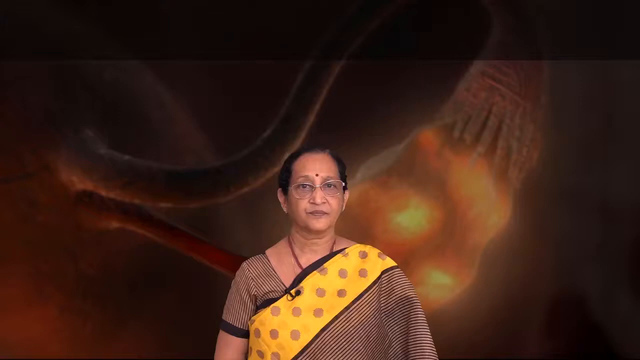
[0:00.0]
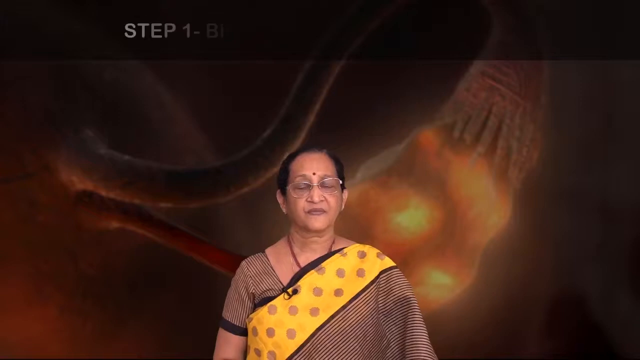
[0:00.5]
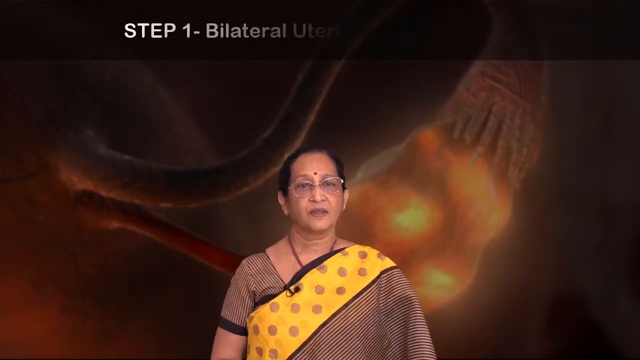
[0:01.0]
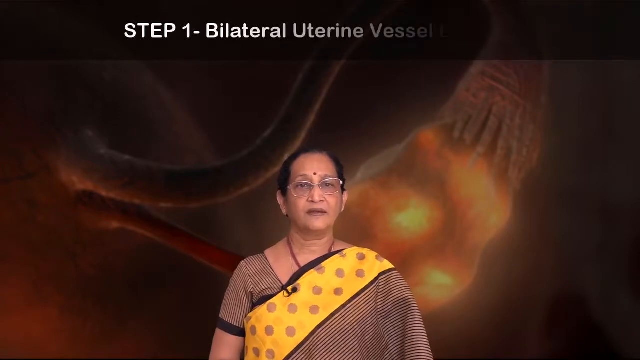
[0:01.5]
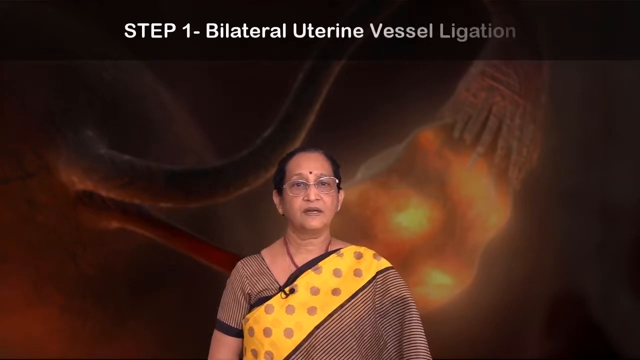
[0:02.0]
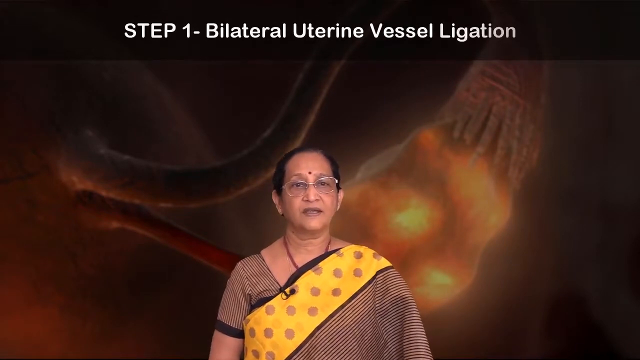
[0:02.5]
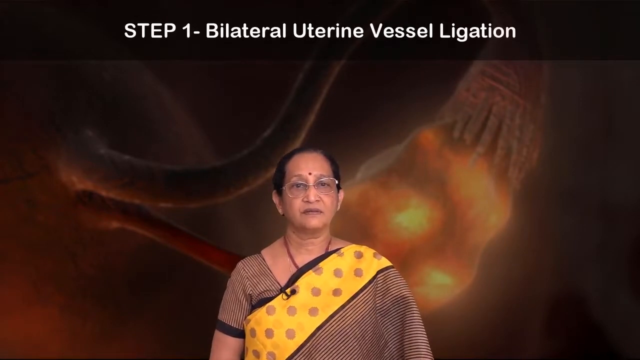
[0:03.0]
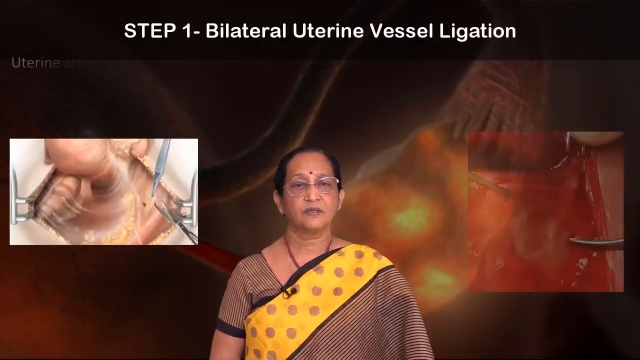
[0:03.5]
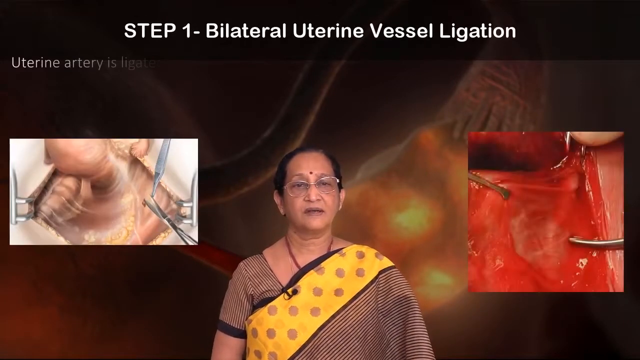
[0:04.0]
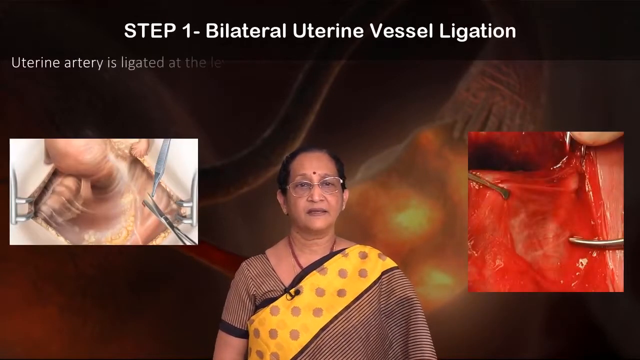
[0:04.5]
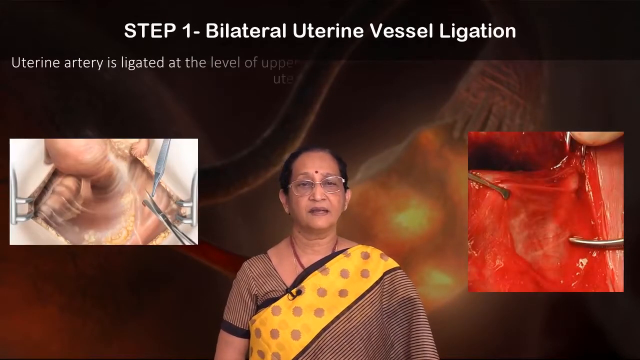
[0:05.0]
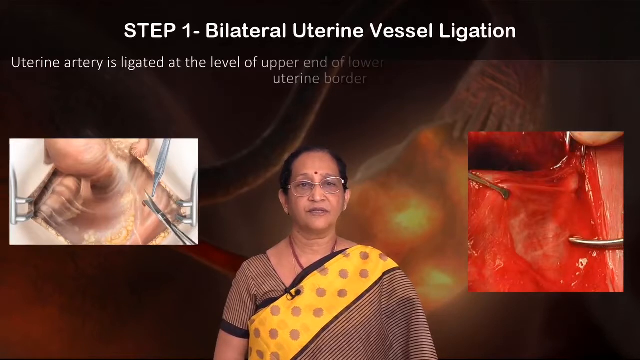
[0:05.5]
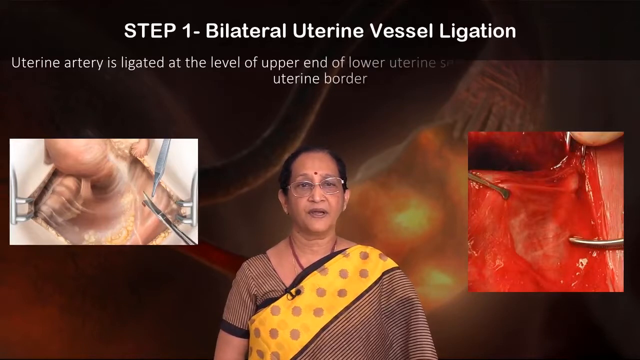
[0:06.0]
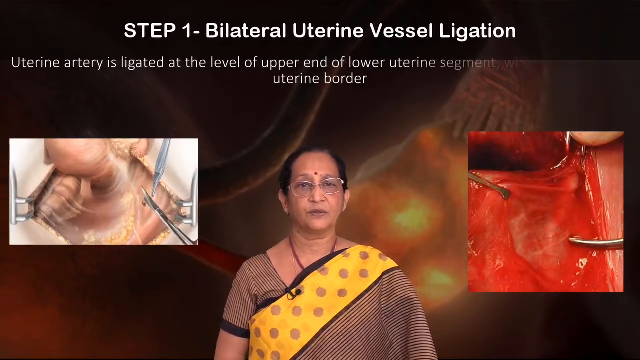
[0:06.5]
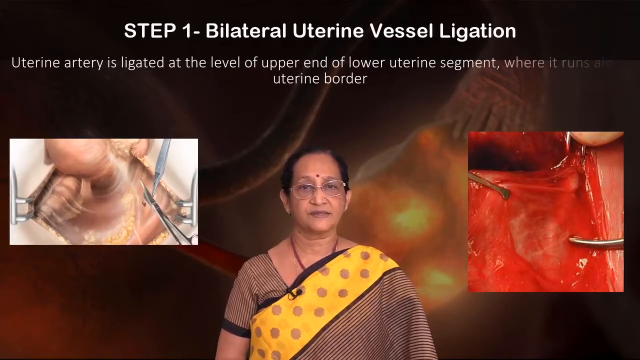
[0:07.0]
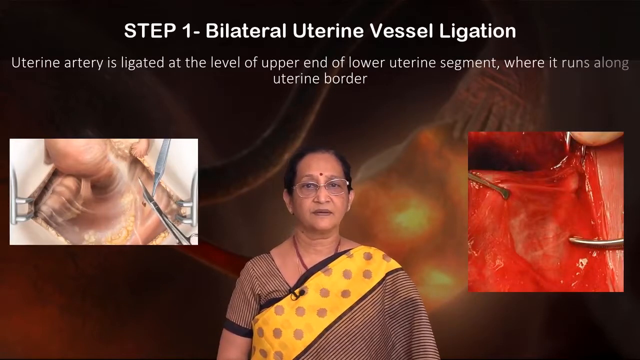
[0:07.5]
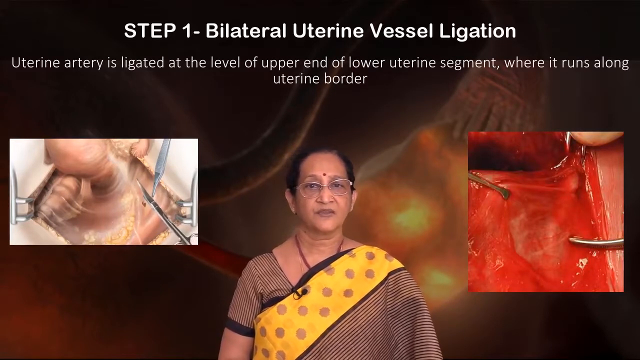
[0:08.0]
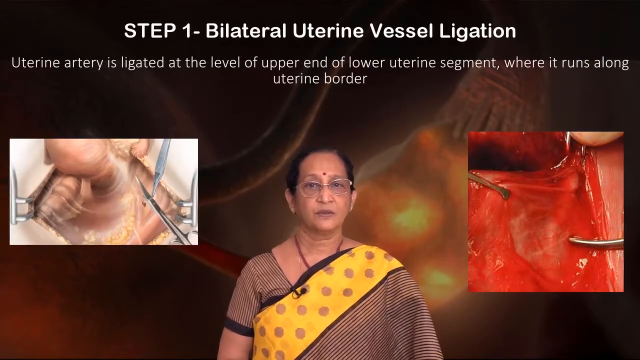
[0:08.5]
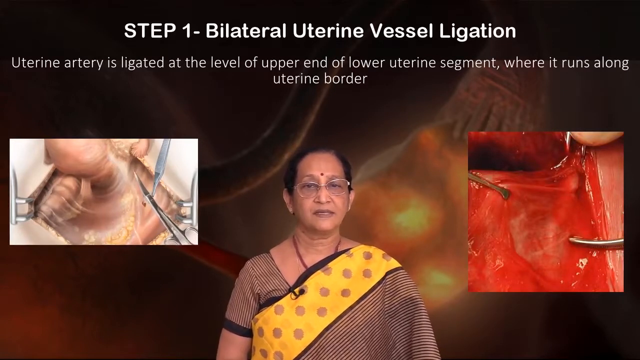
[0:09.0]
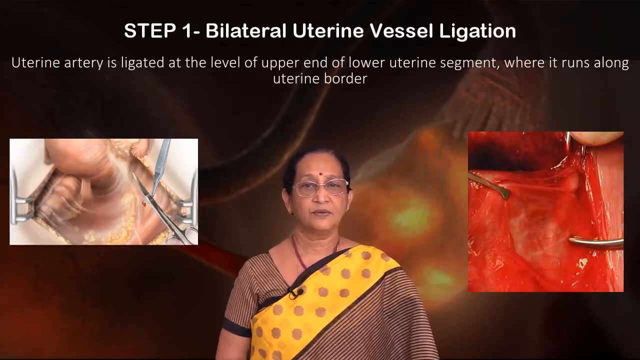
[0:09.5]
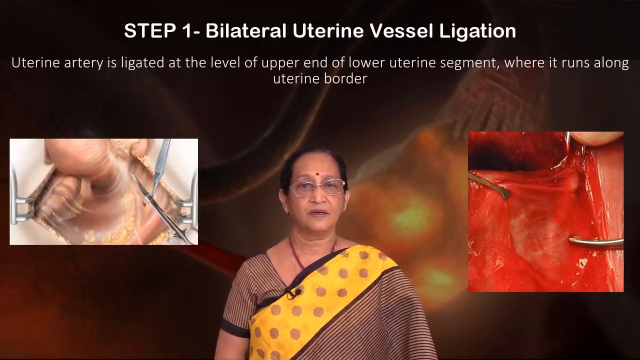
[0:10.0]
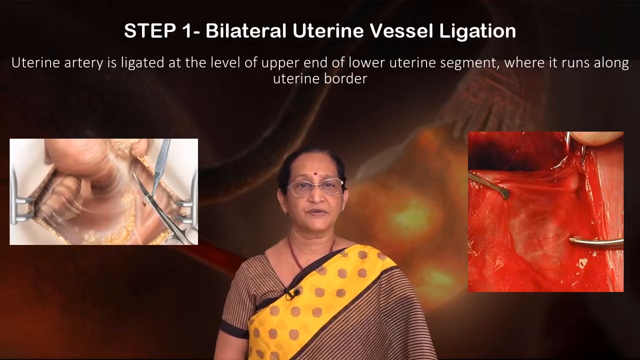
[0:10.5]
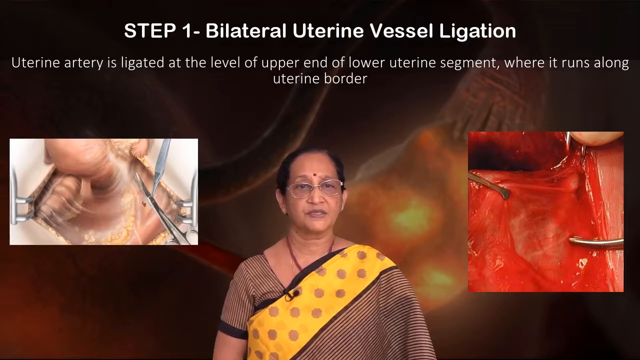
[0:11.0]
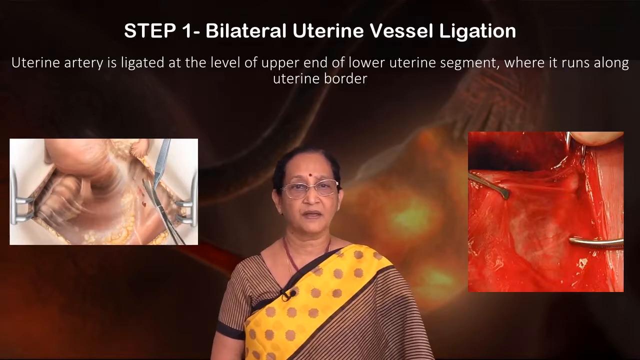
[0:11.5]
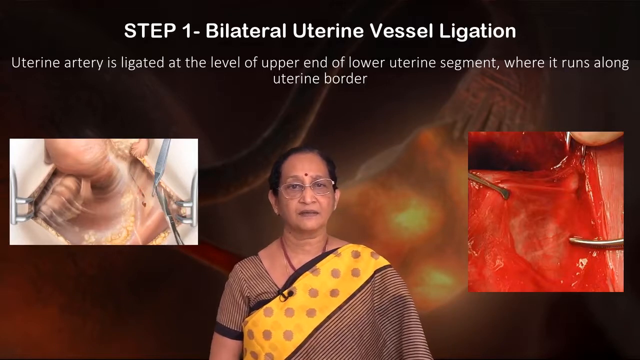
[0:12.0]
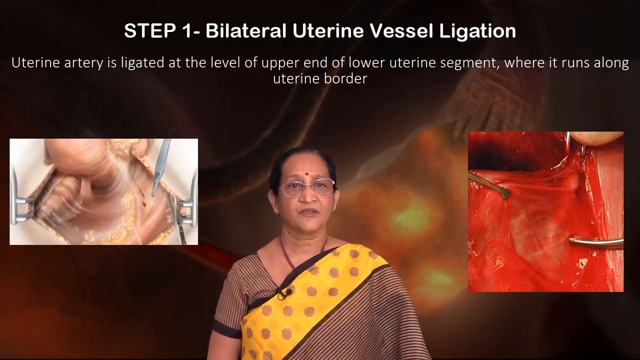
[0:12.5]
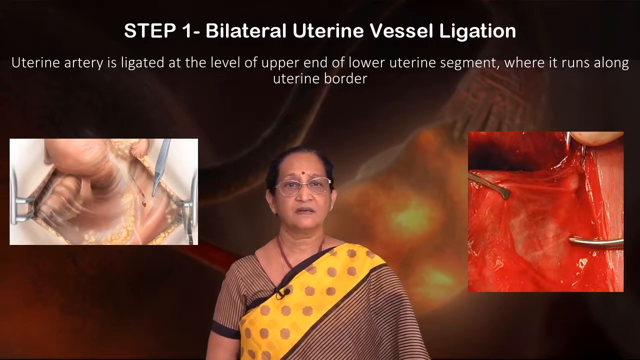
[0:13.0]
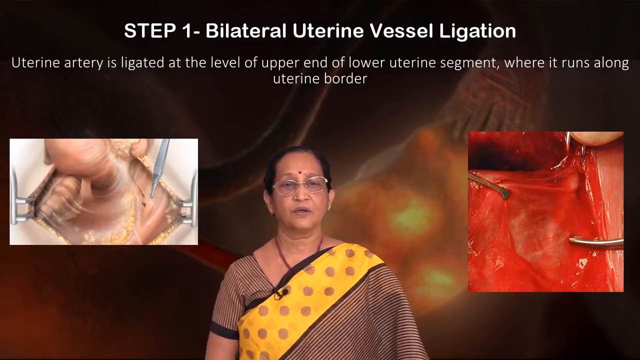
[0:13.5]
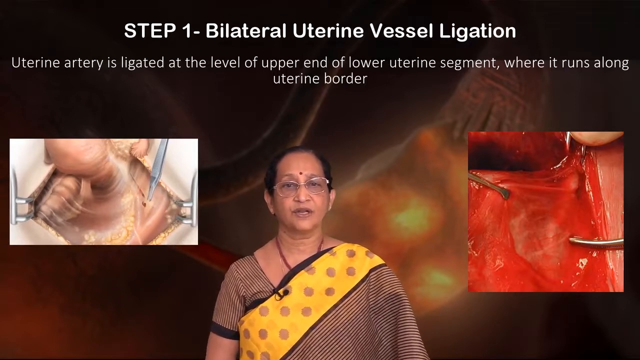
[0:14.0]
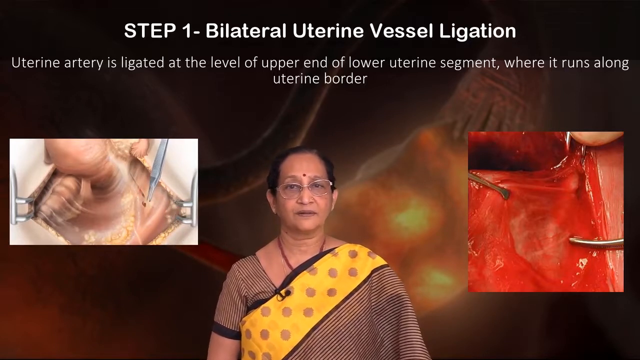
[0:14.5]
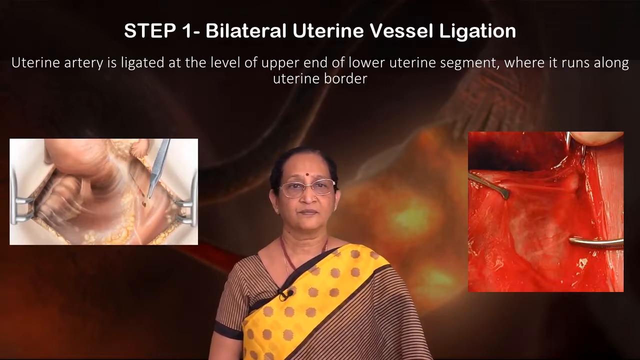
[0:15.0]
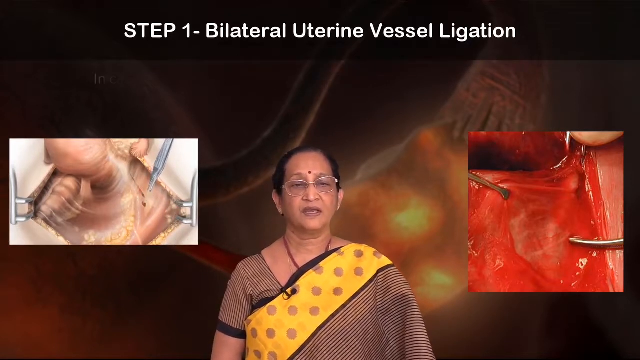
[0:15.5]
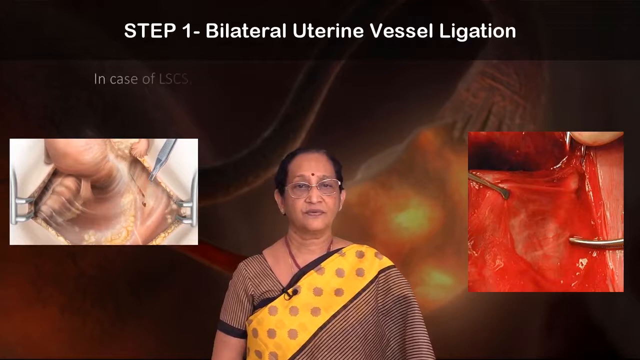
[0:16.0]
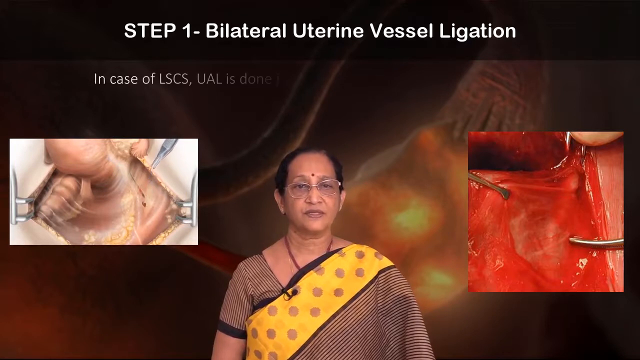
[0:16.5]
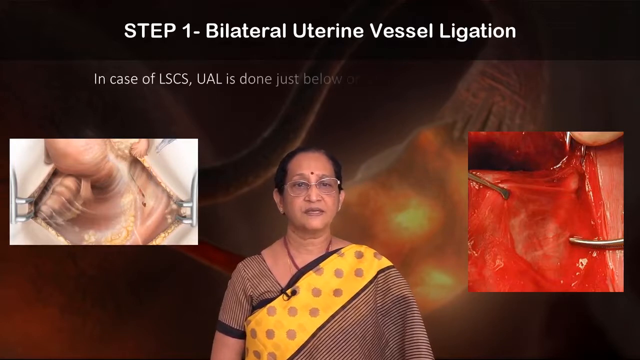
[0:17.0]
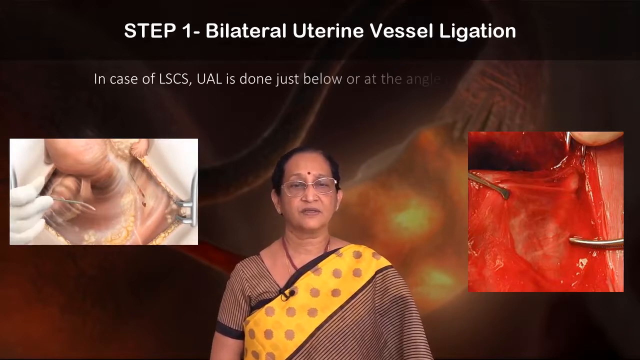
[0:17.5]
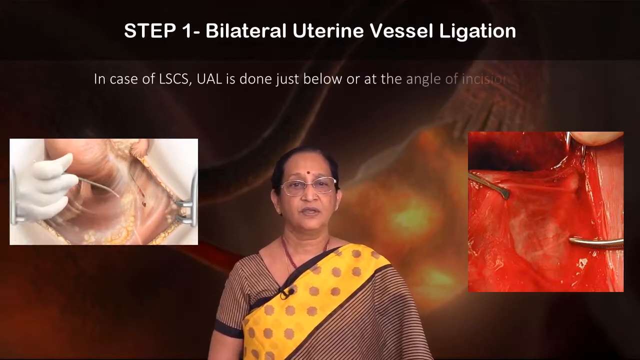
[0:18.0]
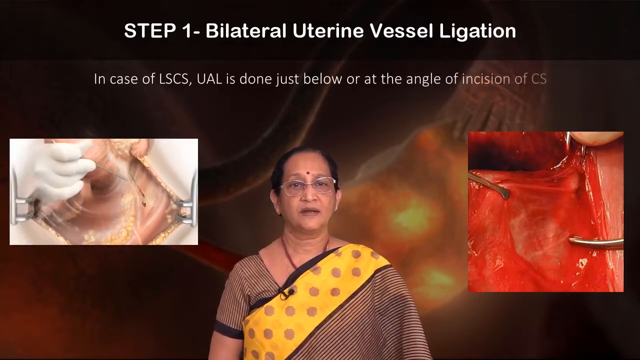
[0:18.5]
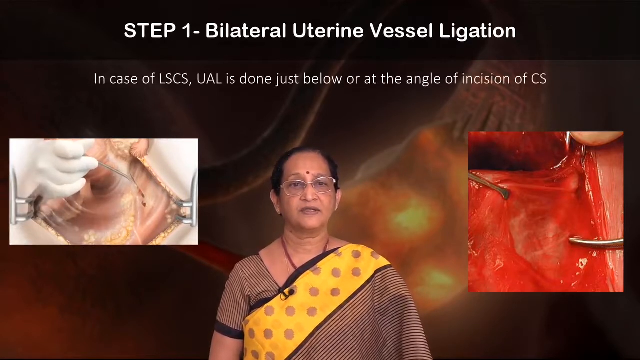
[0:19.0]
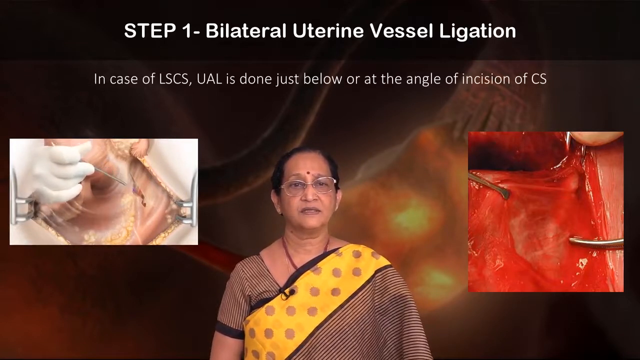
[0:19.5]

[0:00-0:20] A woman is at the center of the frame: an Indian woman wearing a yellow polka-dotted sari across her chest over a brown shirt with black stripes. She wears glasses, has light brown skin and a red dot in the center of her forehead, and is perhaps over 50 years of age. Behind her is what looks like some kind of 3D animated human organ. At the top is a black caption bar with white text reading "step one bilateral uterine vessel ligation". More white words fade in underneath, reading "uterine artery is ligated at the level of upper end of lower uterine segment where it runs along uterine border". On either side of her are pictures of this action. The picture on the left looks like a scalpel cutting into a pried-open patch of skin with human flesh inside; it is illustrated, like an animation. The picture on the right shows surgery tools prying open human flesh, clean inside. She is peeking at the camera between the two pictures. More white text appears, reading "in case of LSCS UAL is done just below or at the angle of incision of CS."